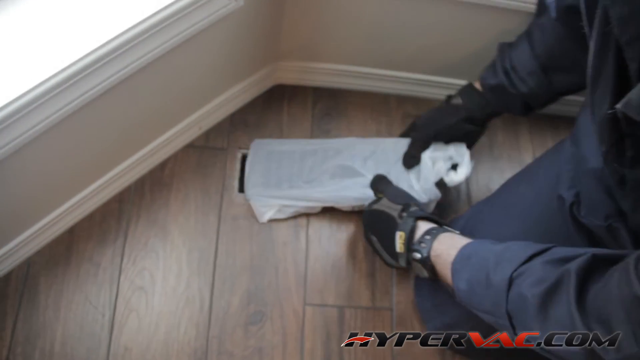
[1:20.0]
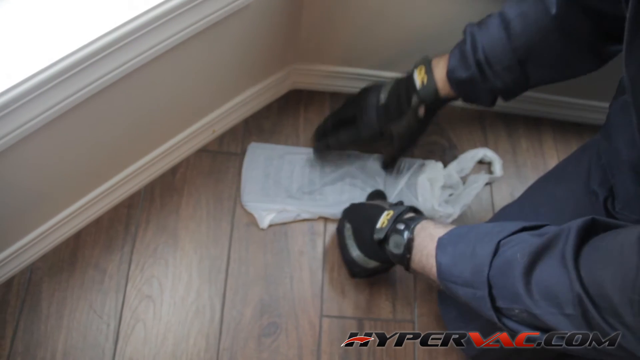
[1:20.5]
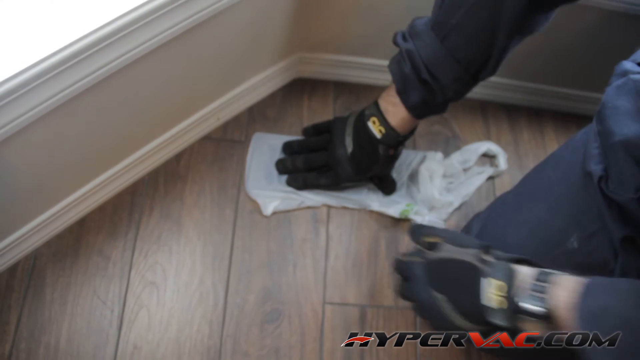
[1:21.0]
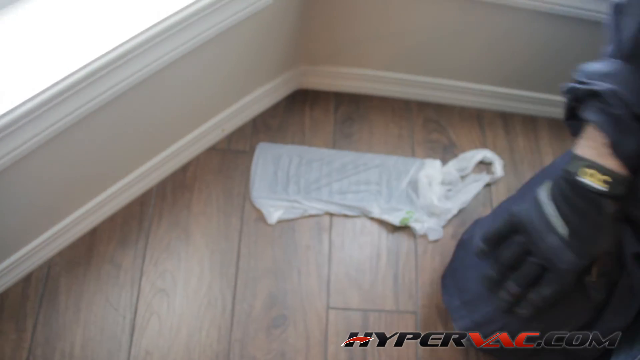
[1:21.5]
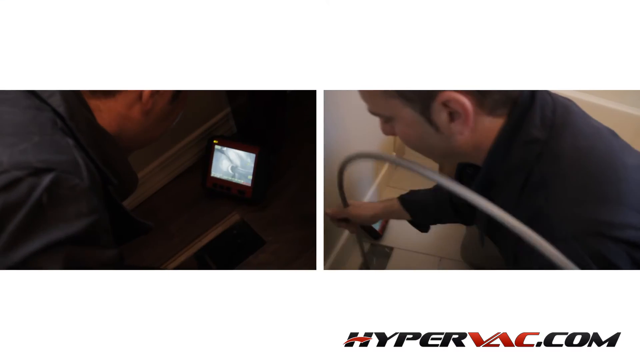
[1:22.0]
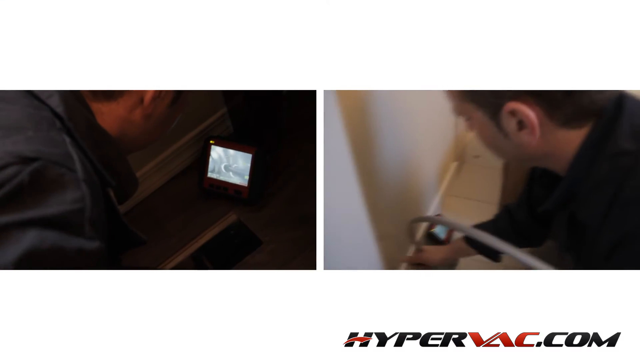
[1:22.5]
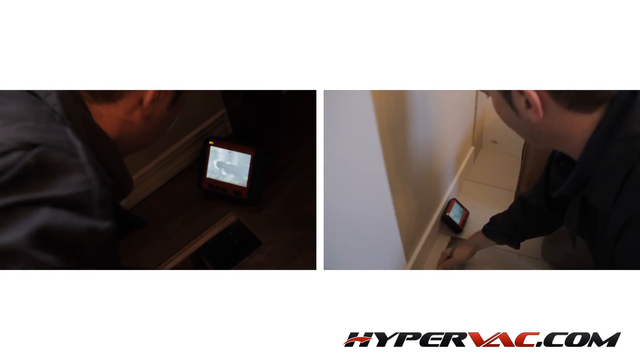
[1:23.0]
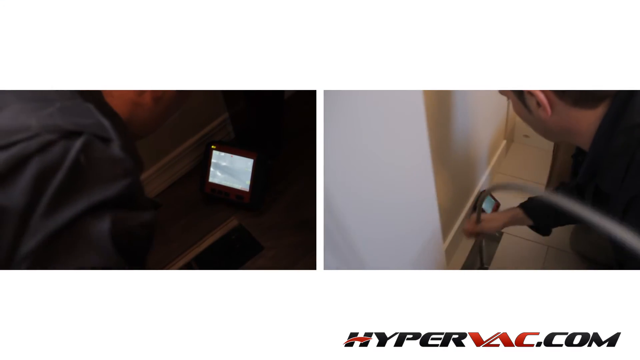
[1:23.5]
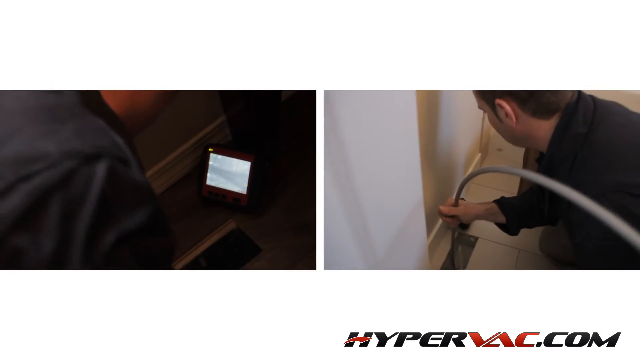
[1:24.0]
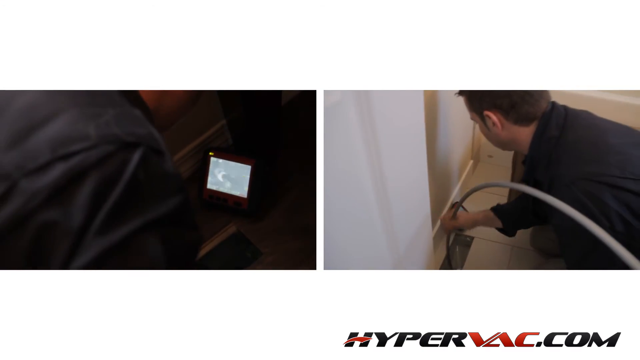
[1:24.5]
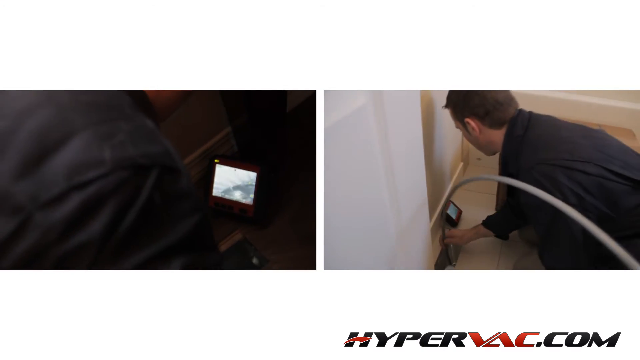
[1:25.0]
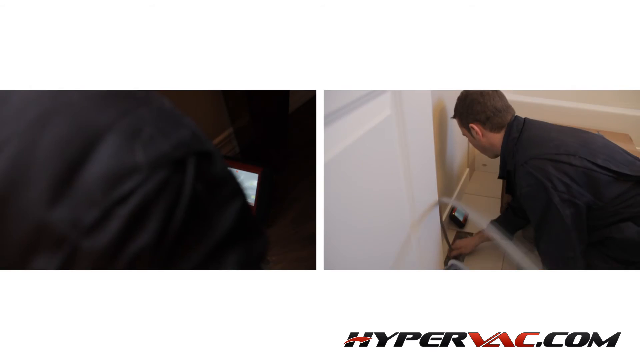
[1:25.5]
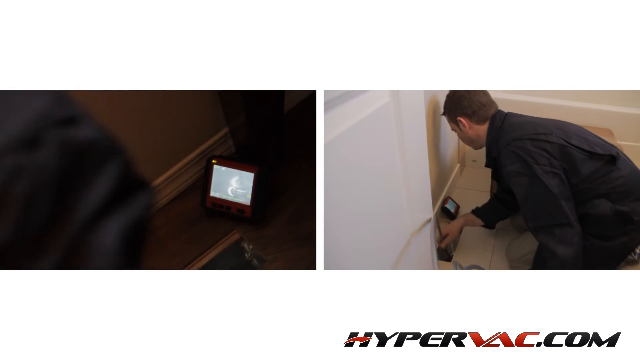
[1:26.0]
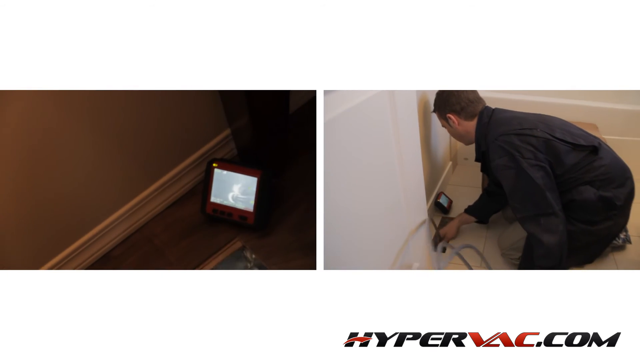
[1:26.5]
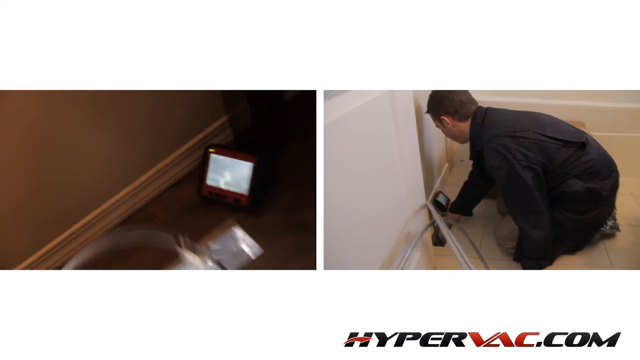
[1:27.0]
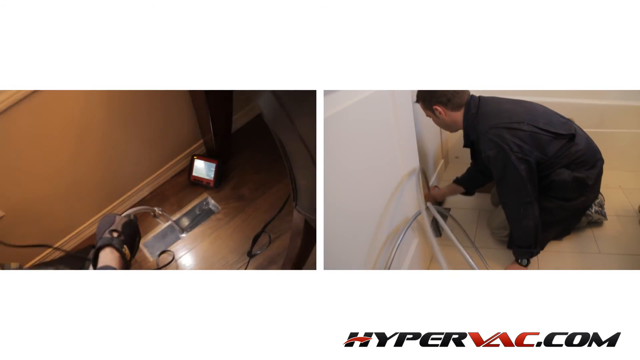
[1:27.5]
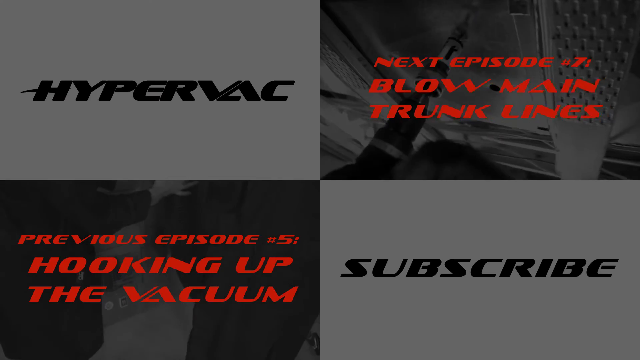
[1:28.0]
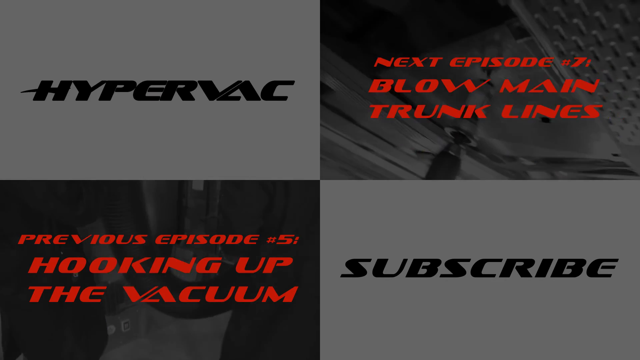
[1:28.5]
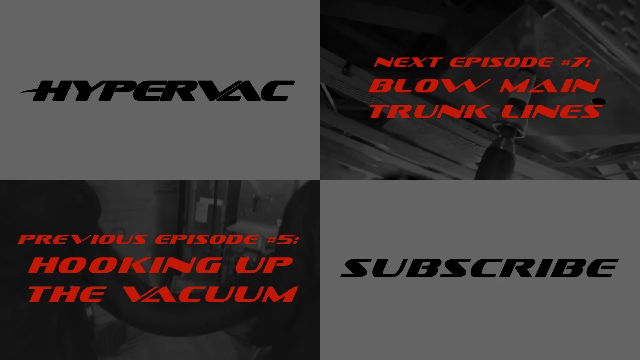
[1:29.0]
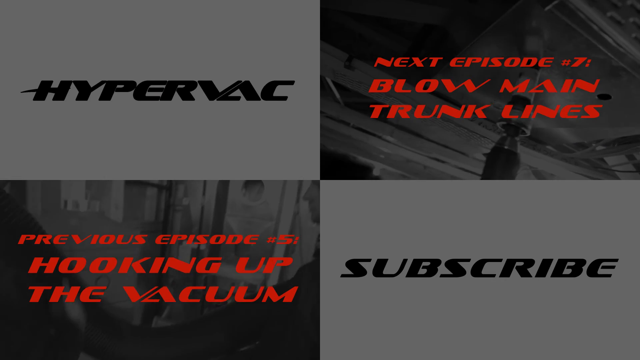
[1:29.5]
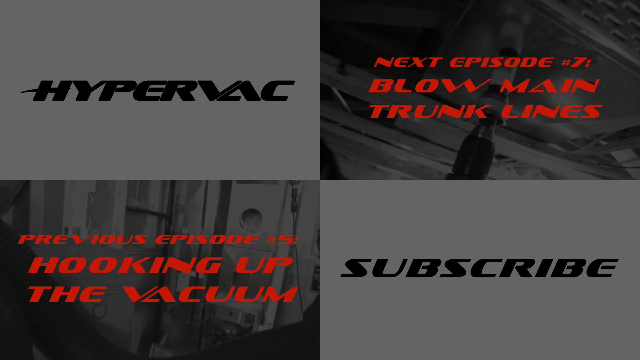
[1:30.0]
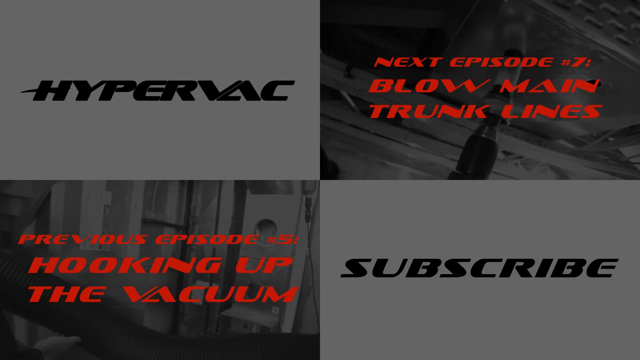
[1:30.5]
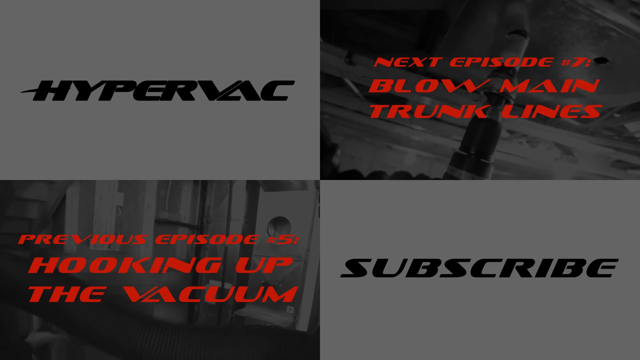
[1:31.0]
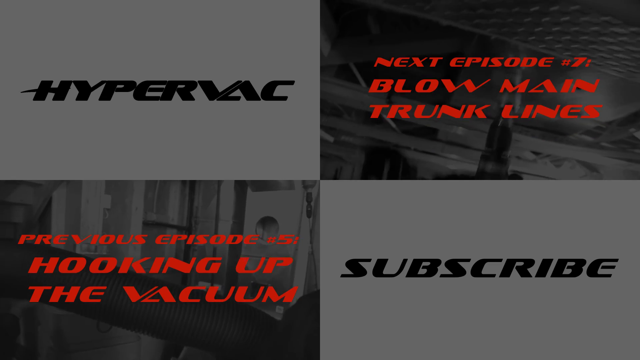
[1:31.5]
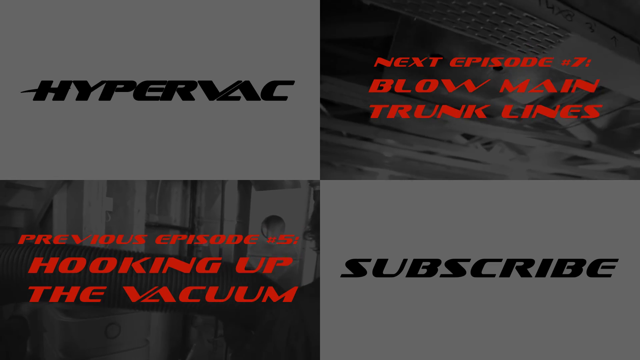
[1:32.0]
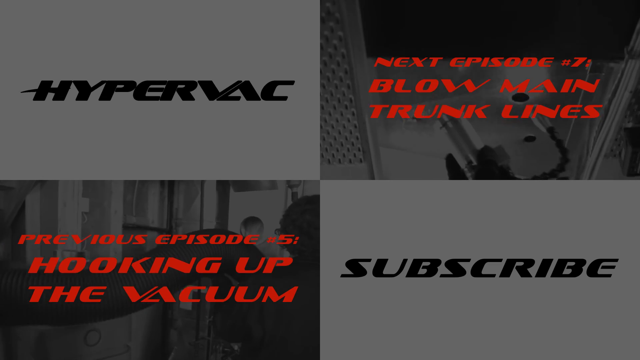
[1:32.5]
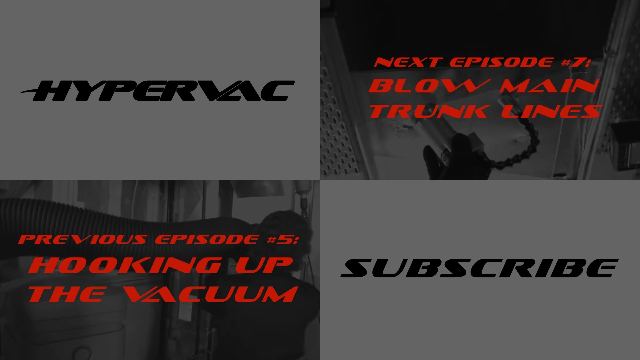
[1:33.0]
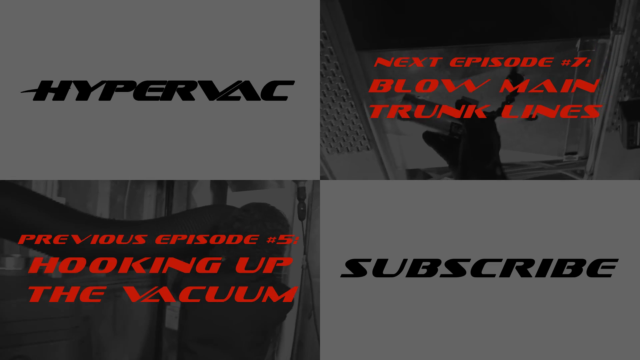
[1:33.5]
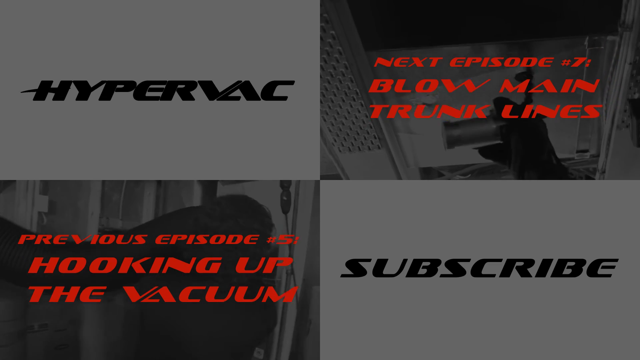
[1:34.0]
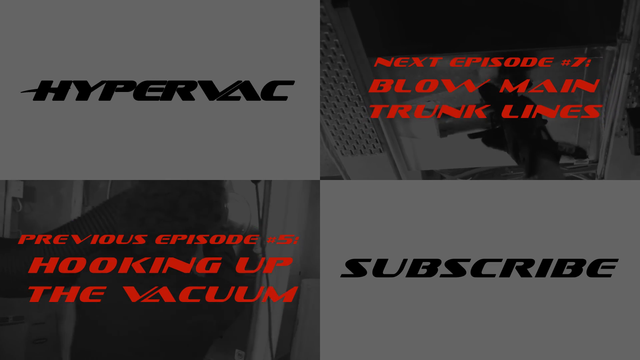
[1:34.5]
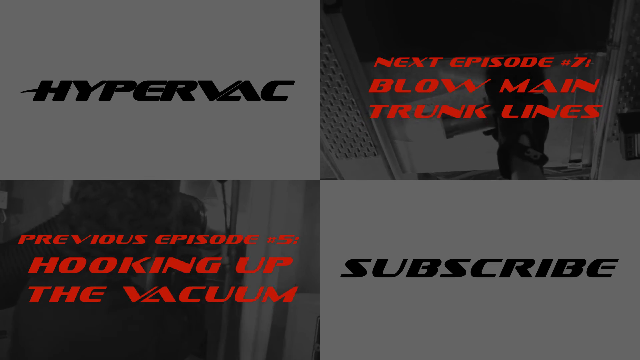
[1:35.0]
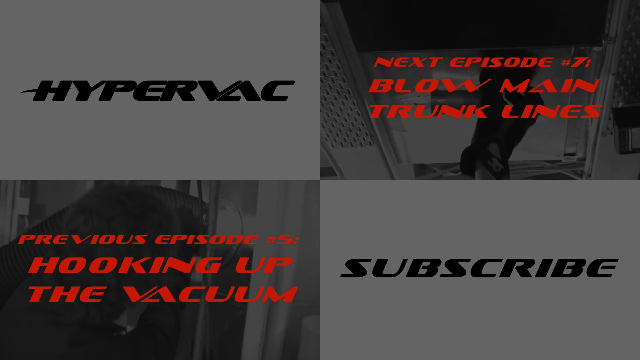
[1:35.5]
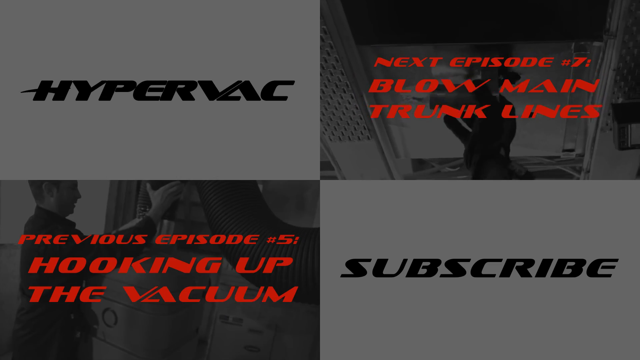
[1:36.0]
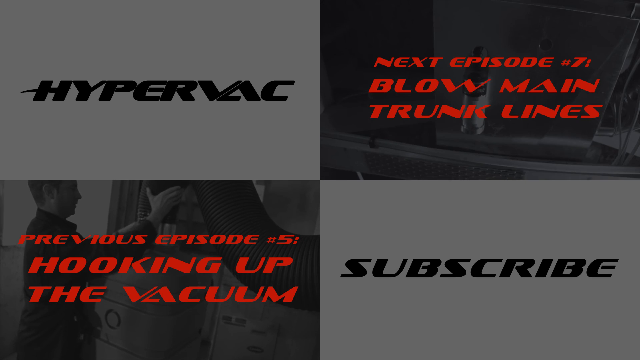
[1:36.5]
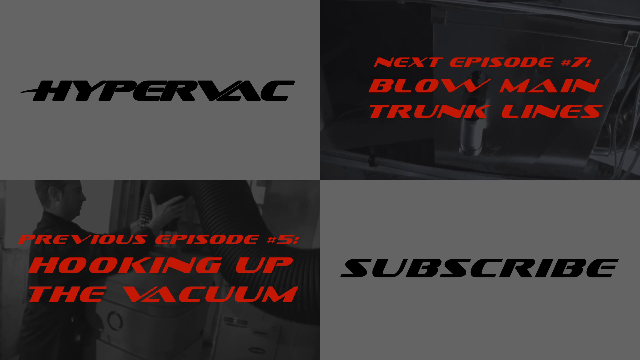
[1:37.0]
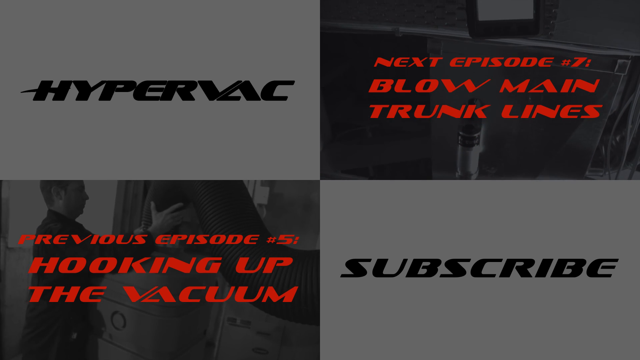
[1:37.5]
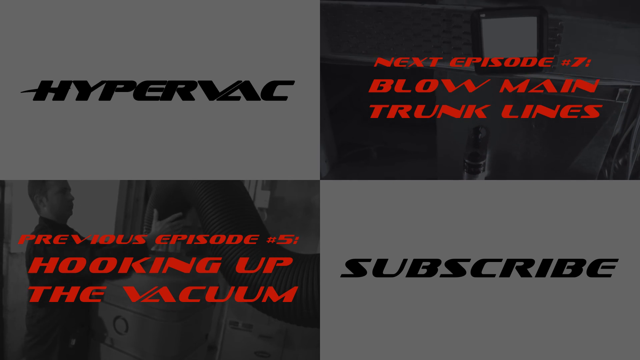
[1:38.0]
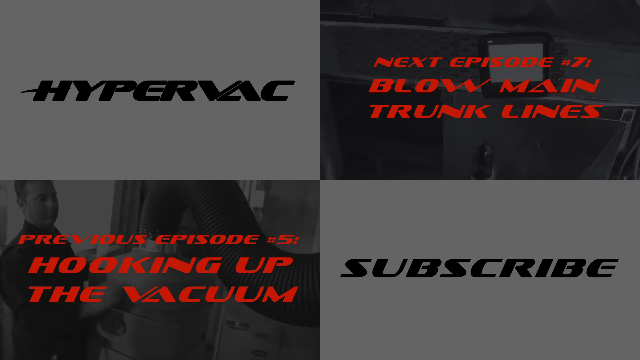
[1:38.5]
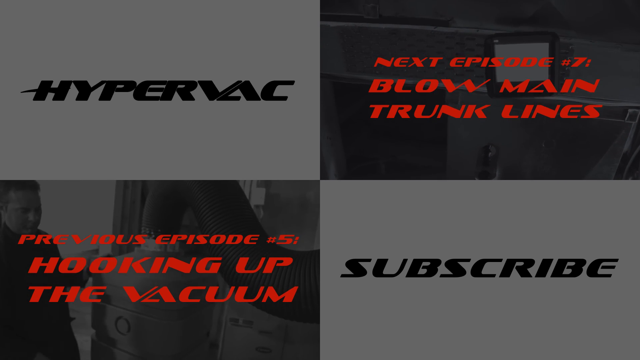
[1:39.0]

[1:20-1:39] The man works on the vent area, placing a white bag on top of the vent, closing it over the vent and sealing it. The video cuts to him checking the other vents in the house, placing the camera and tube into the ground with a small monitor next to him as he stuffs the rope and tube into the vents. An end screen follows: text at the top reads "next episode 7, below main trunk lines," and text at the bottom reads "previous episode 5, looking up the vacuum," with footage of the workers doing these jobs playing in the background of the episode panels. The next and previous episode text is red. "Subscribe" and "HyperVAC" (on the top left) are each written on a white background.